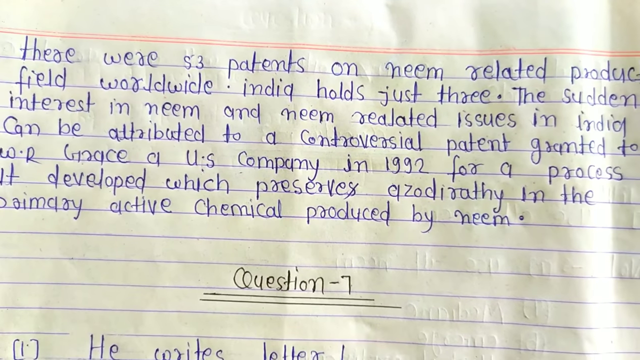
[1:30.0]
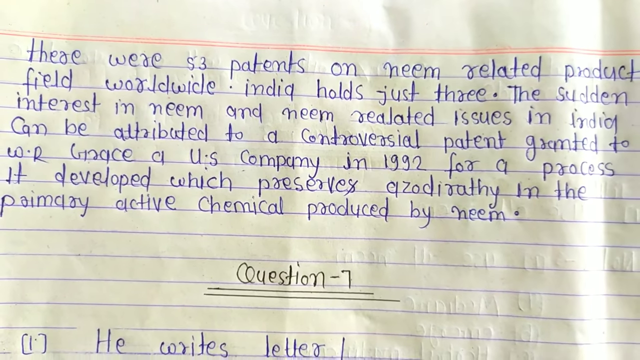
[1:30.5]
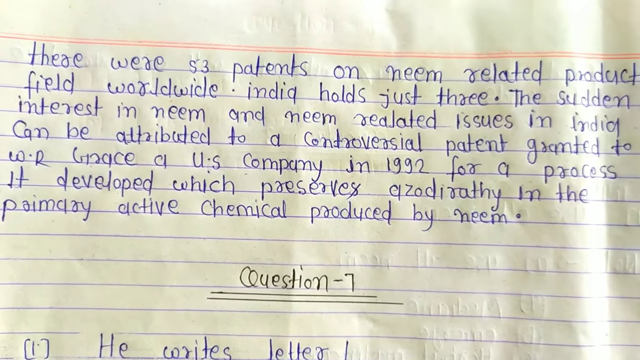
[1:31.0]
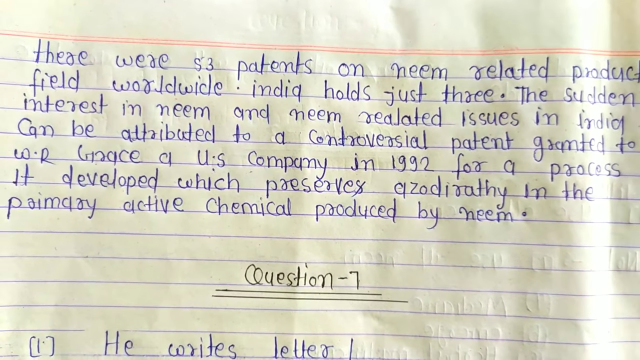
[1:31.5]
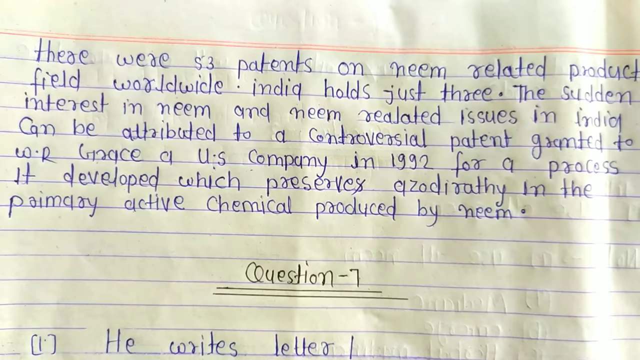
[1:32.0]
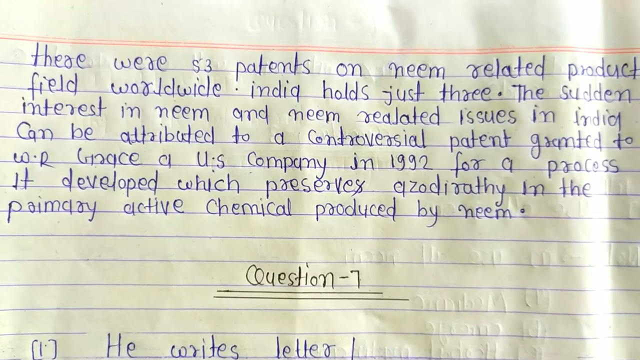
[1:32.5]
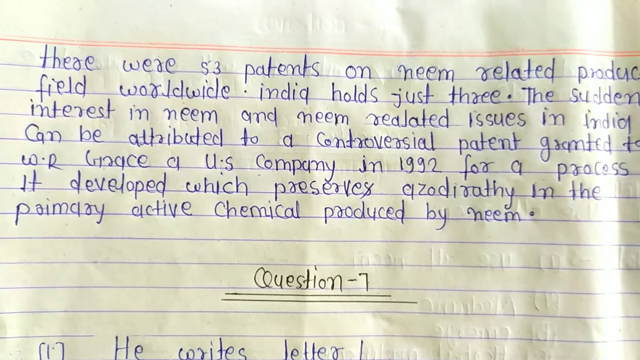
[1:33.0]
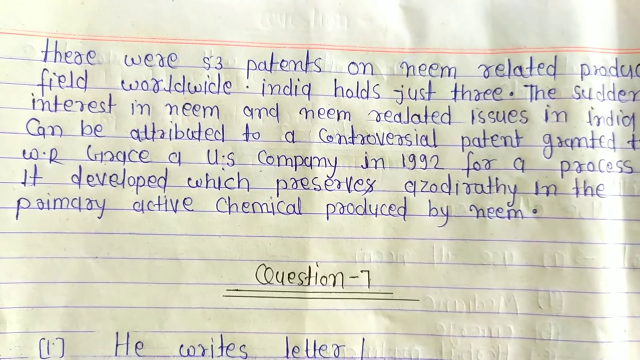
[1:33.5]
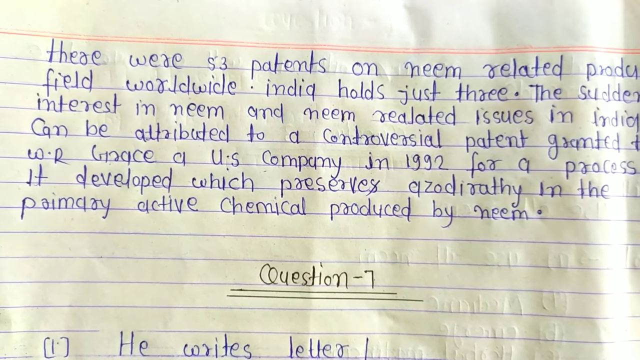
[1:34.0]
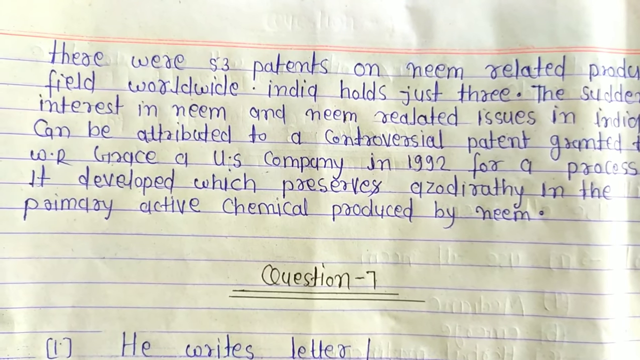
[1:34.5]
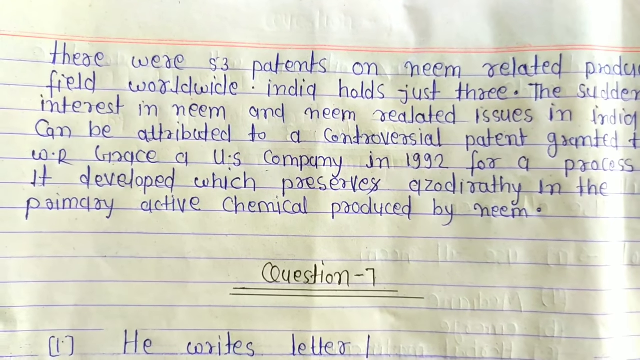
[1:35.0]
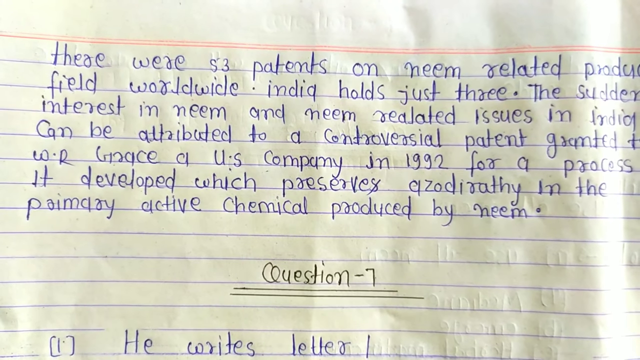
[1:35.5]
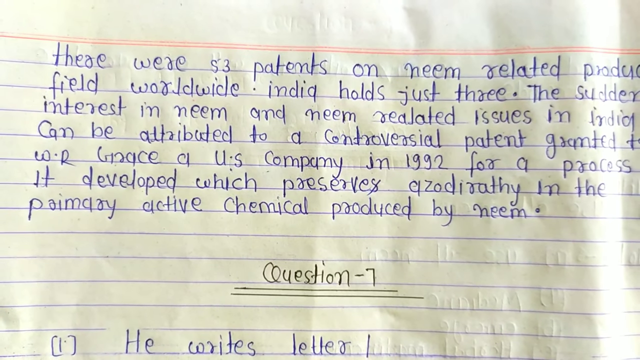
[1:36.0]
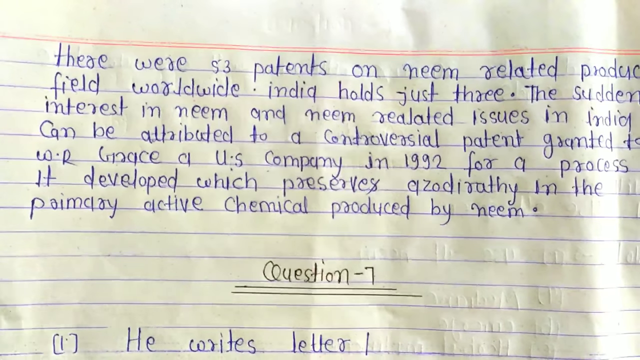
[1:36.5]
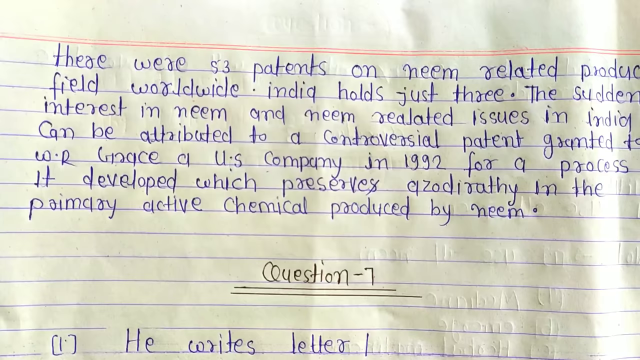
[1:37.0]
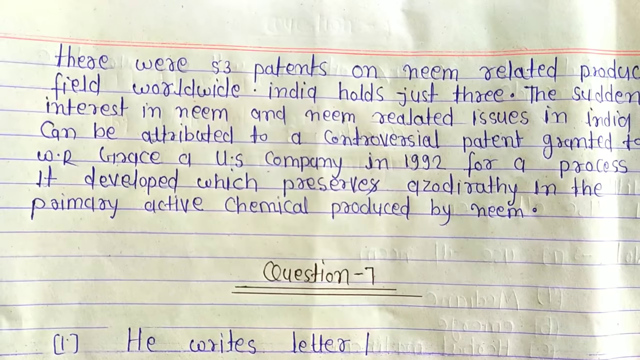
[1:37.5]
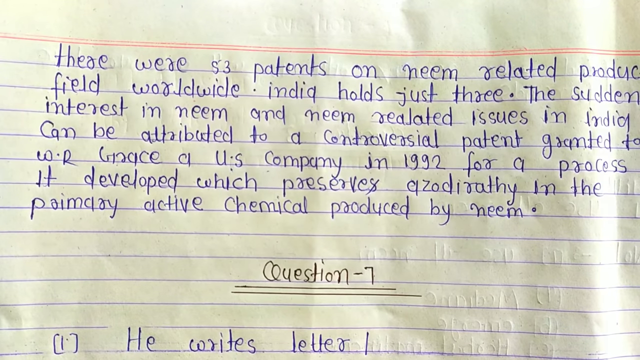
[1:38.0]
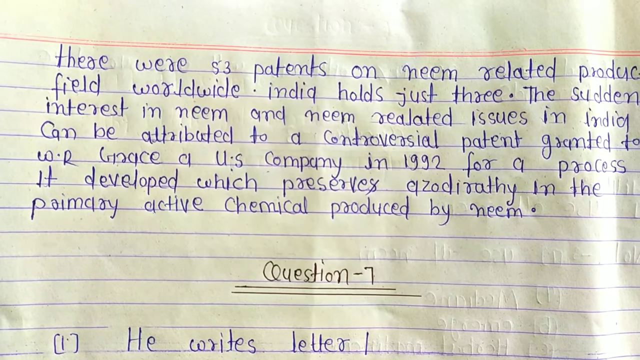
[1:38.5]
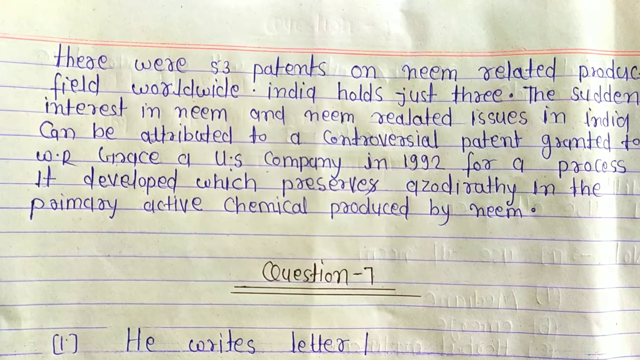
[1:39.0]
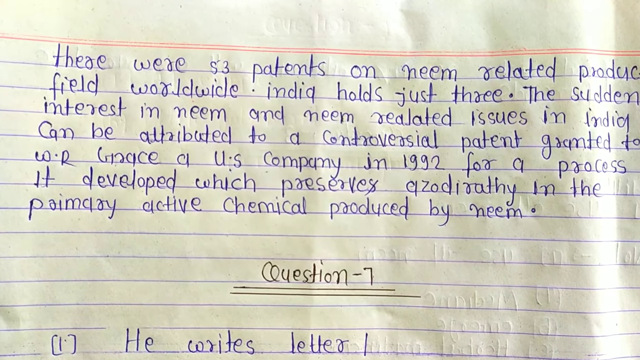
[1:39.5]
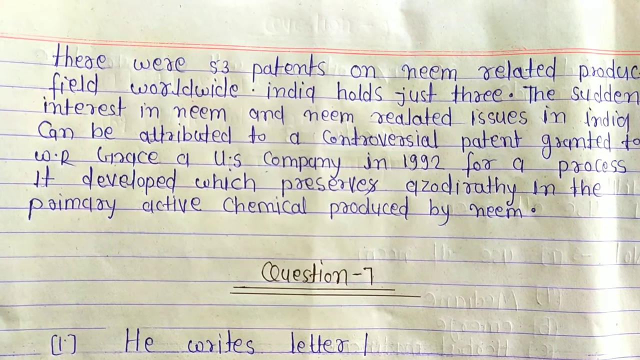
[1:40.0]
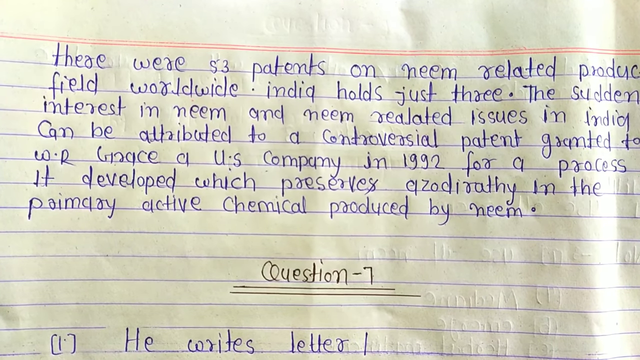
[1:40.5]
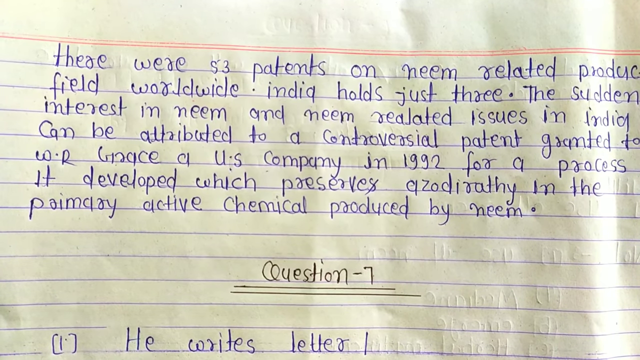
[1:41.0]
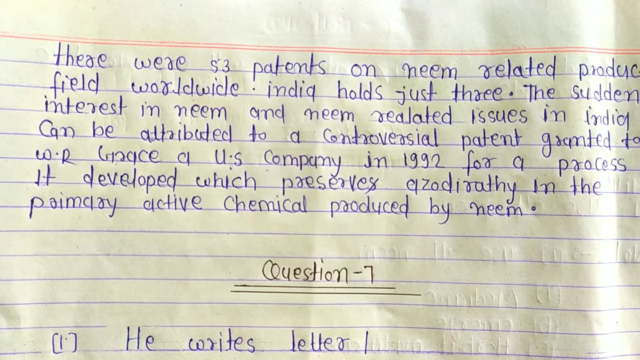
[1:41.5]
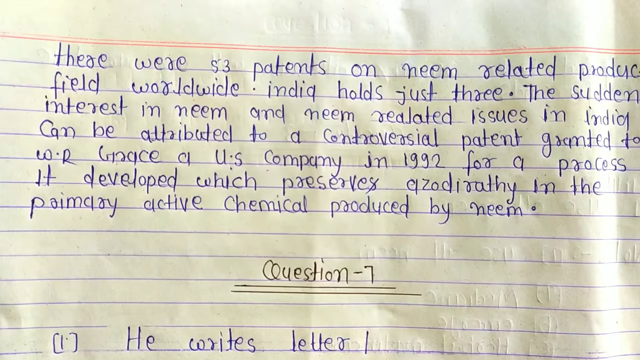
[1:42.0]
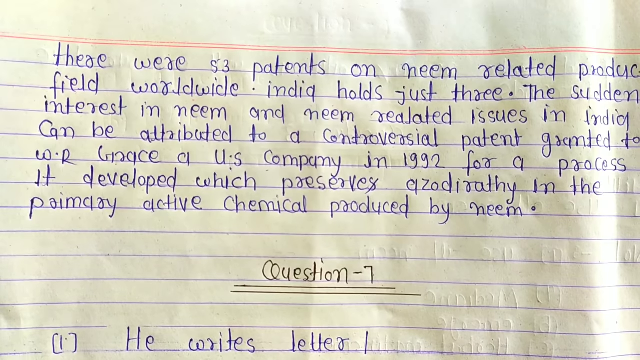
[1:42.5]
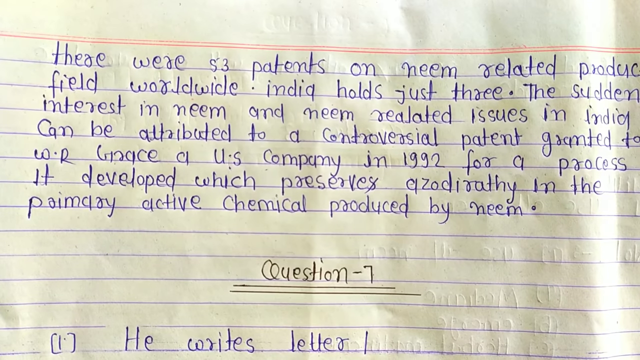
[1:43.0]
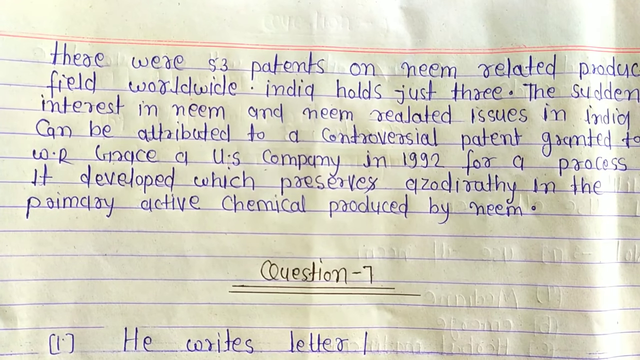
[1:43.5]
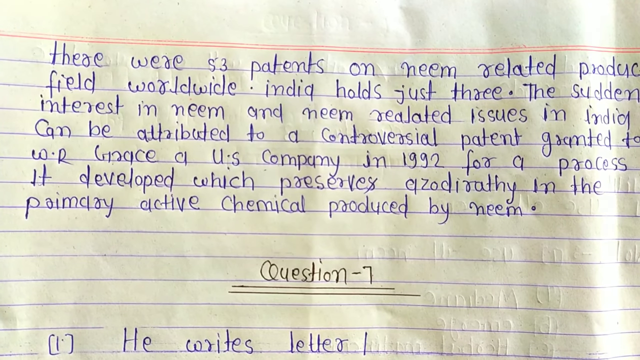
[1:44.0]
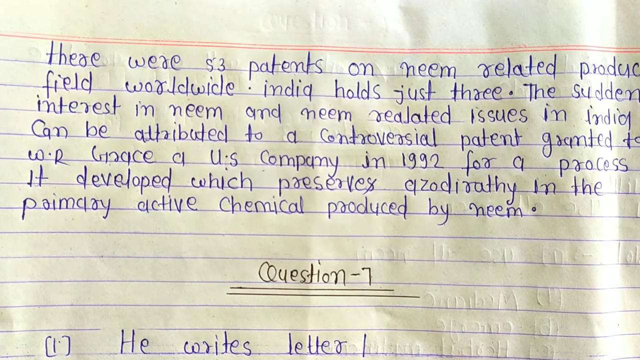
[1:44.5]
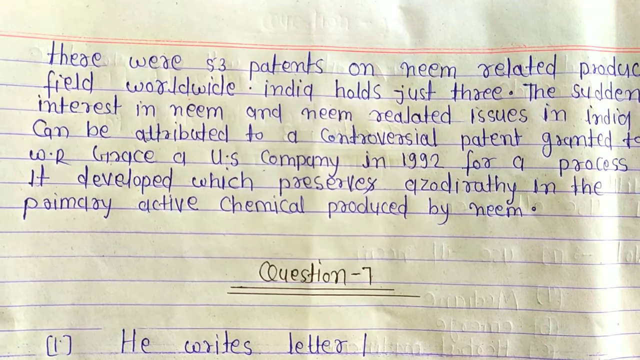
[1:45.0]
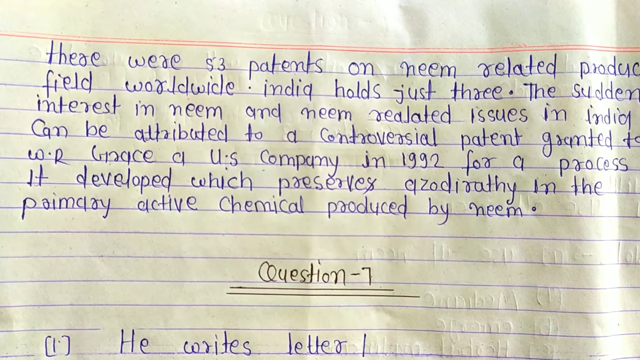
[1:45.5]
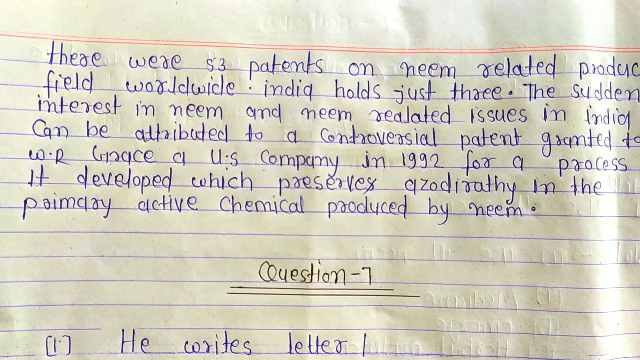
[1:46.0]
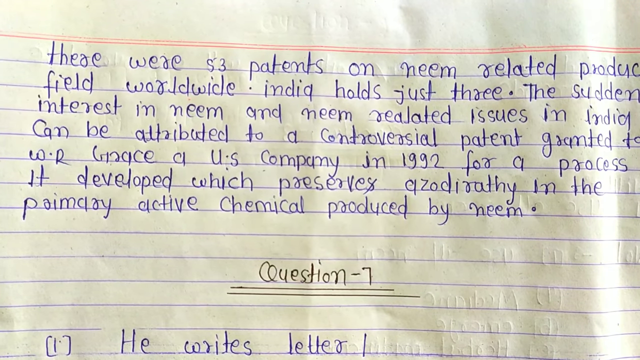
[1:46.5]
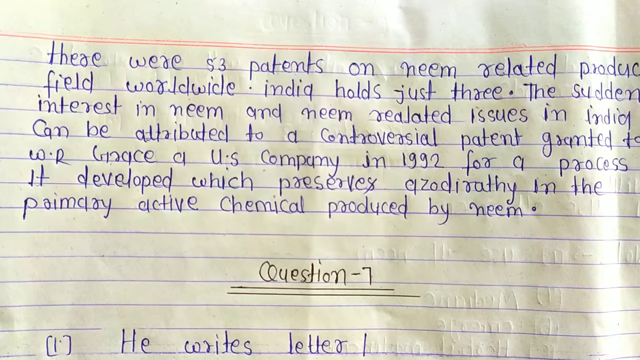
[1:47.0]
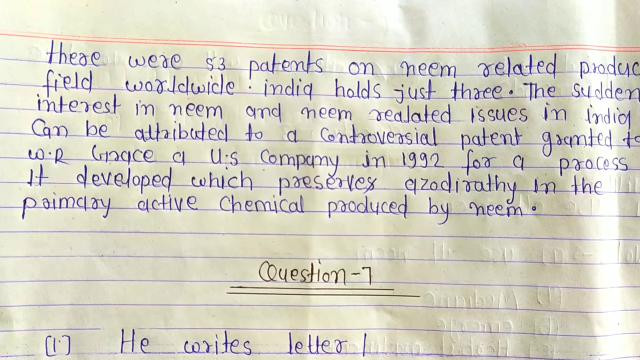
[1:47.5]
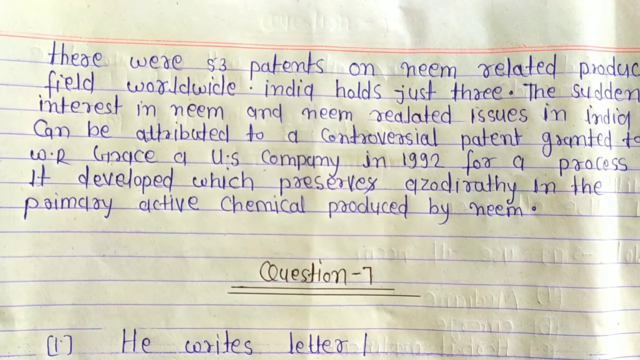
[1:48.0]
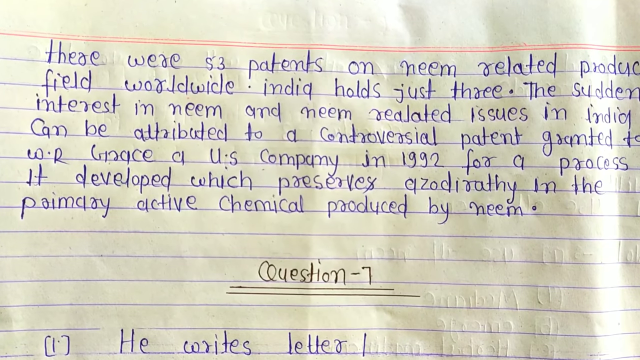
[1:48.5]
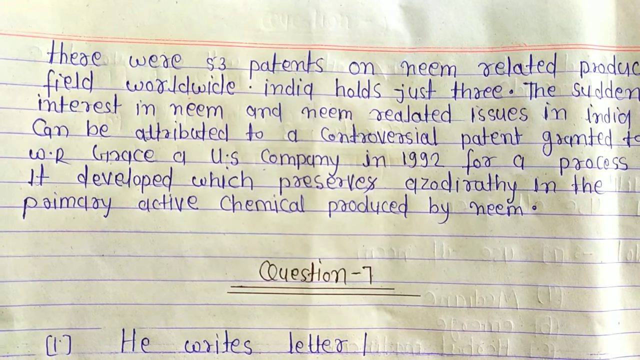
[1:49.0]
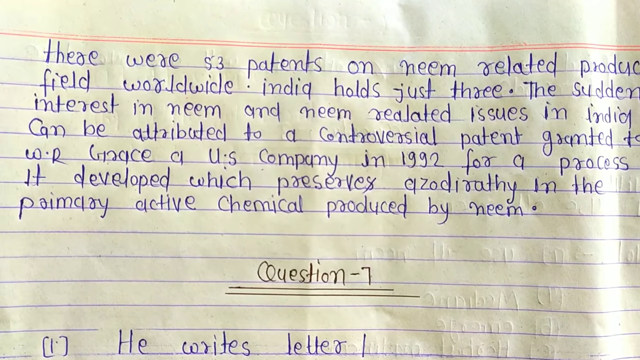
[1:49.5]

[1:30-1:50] The paper moves back a little, probably due to the camera, revealing more of the words. In blue ink it reads "there were 53 patents on neem related products filled worldwide. india holds just three.", with "india" in lowercase. It continues "the sudden interest in neem and neem related issues in India can be attributed to a controversial patent granted to", apparently "W.R. Grace", "a US company in 1992 for a process it developed", followed by a hard-to-read handwritten word that seems to begin with a P and end with a Y, and then "active chemical produced by neem". A few lines down, in black, "question seven" is written and underlined twice, with a "1" in brackets.